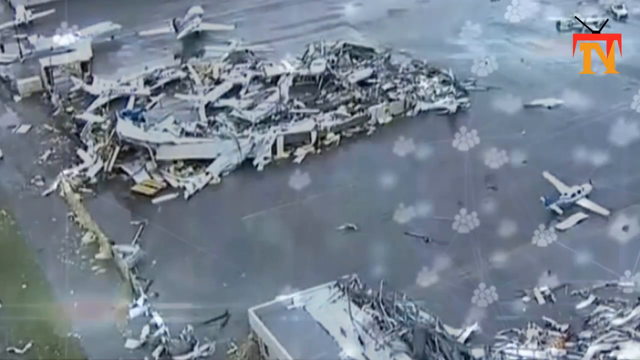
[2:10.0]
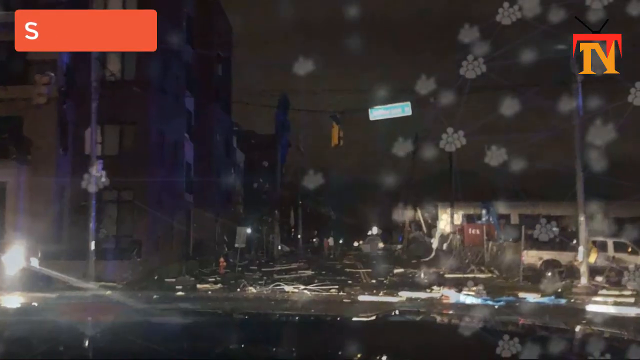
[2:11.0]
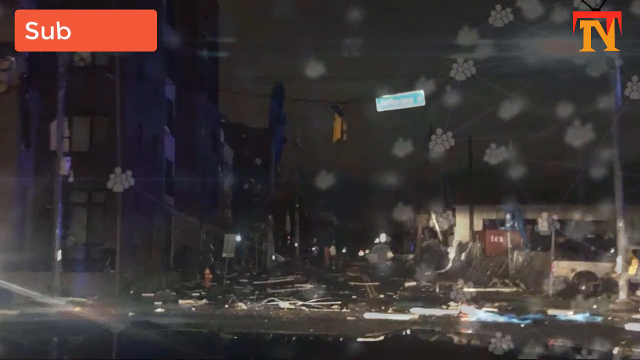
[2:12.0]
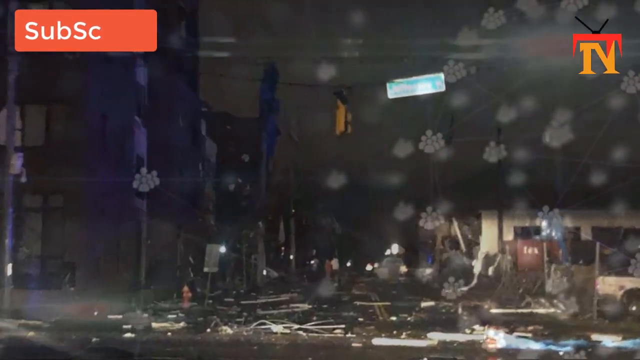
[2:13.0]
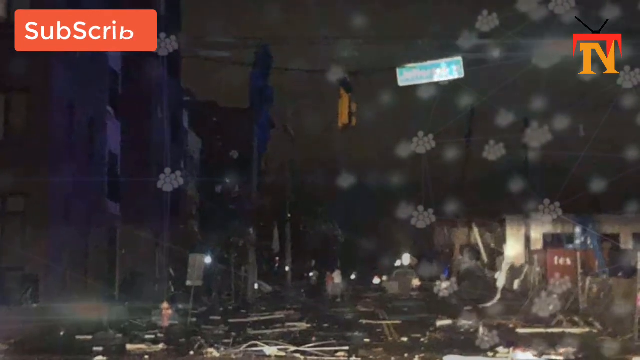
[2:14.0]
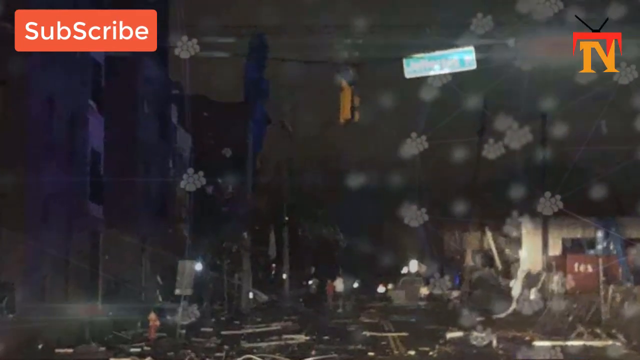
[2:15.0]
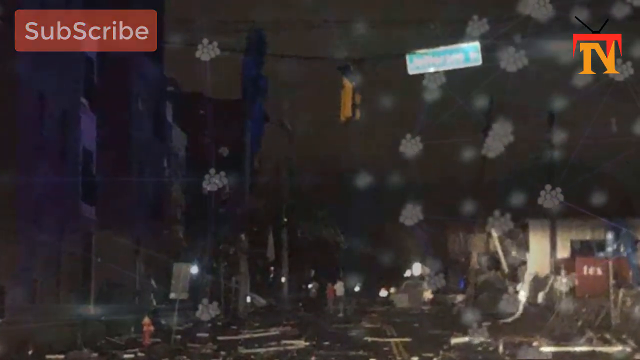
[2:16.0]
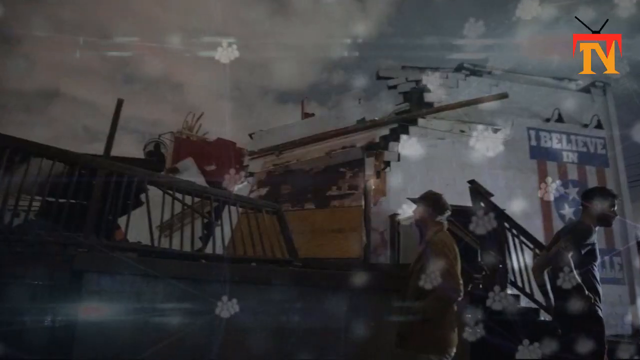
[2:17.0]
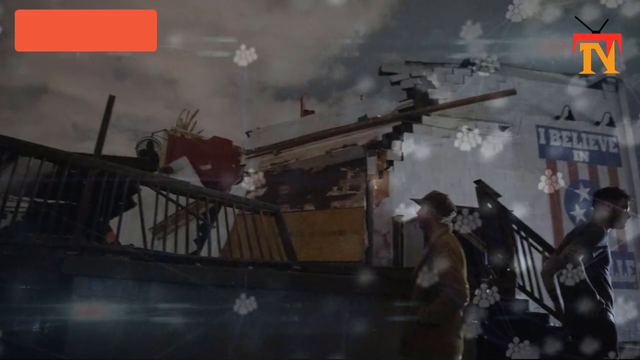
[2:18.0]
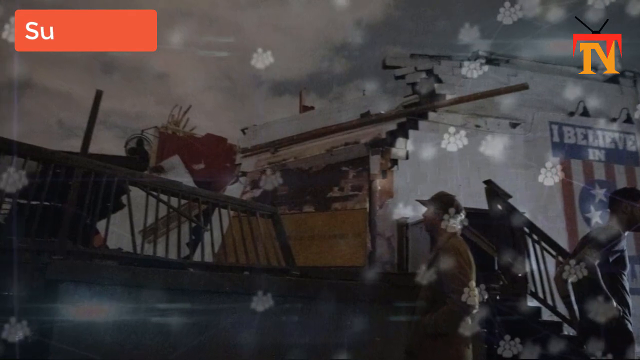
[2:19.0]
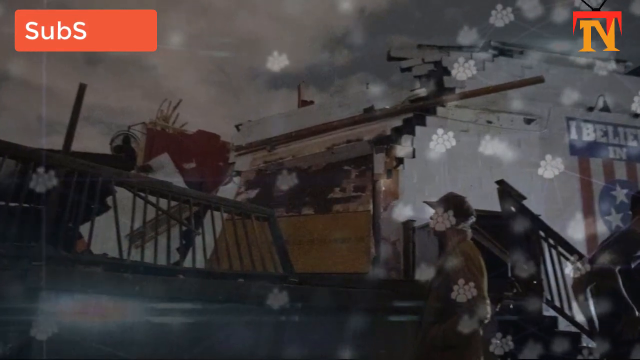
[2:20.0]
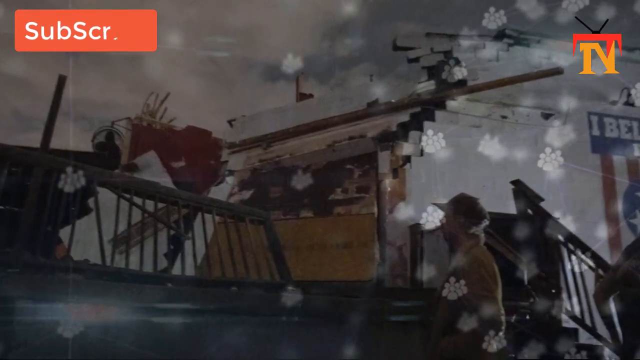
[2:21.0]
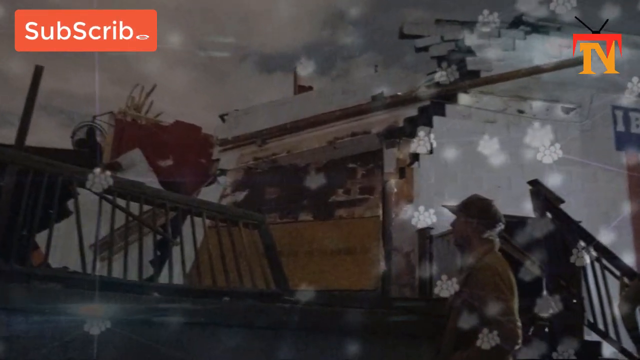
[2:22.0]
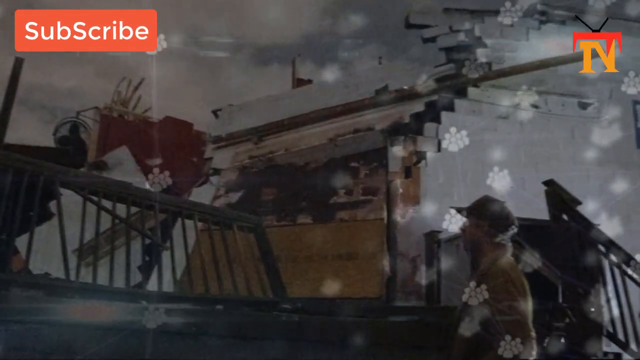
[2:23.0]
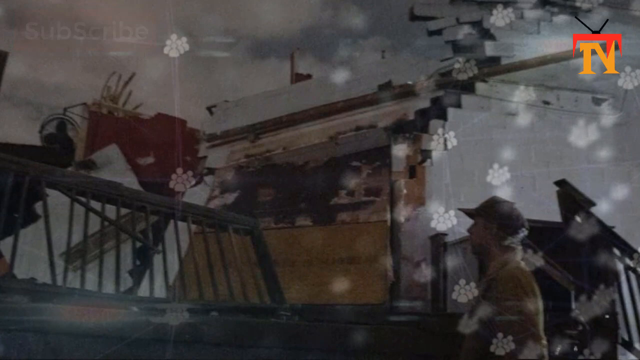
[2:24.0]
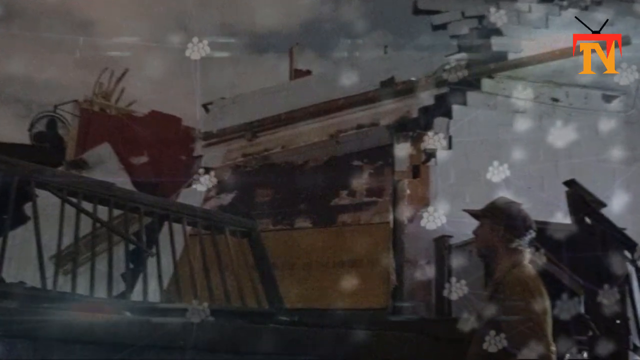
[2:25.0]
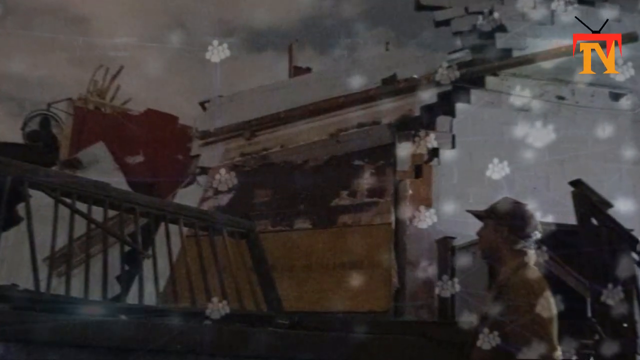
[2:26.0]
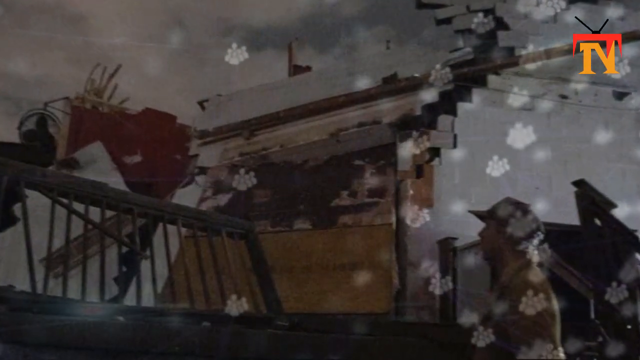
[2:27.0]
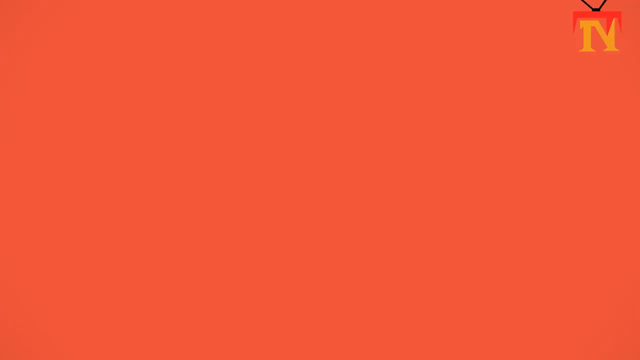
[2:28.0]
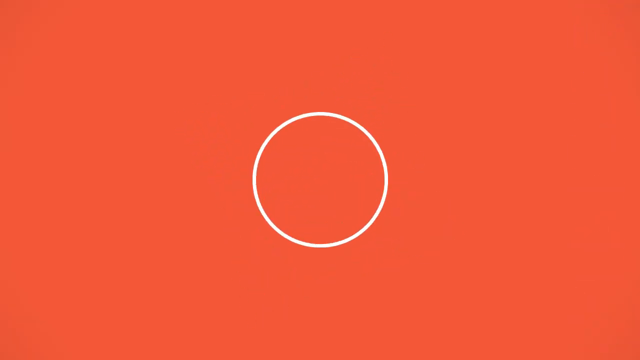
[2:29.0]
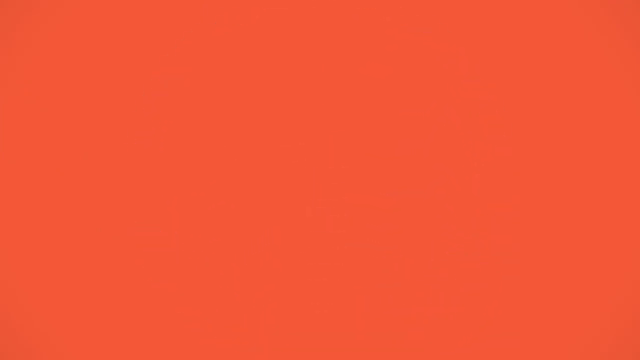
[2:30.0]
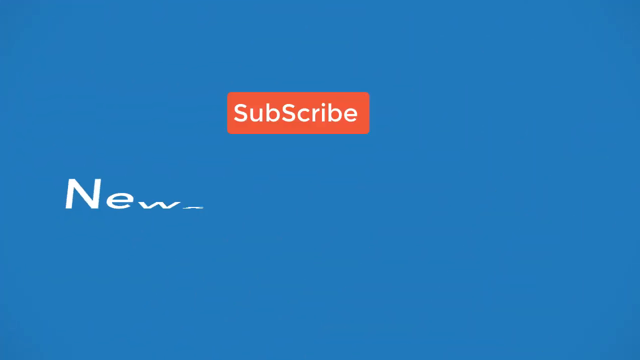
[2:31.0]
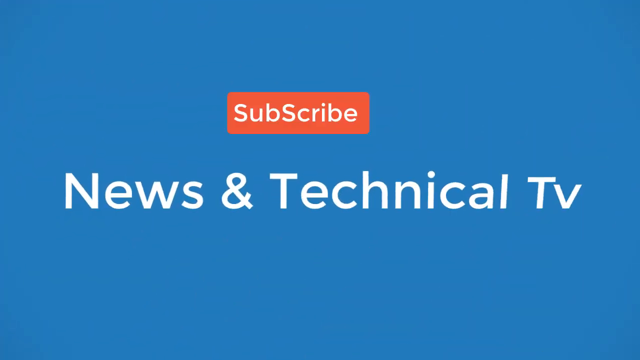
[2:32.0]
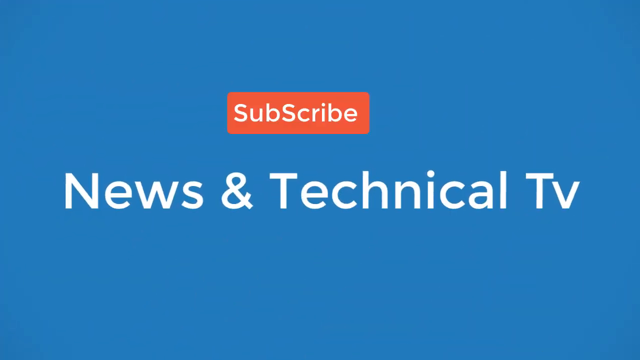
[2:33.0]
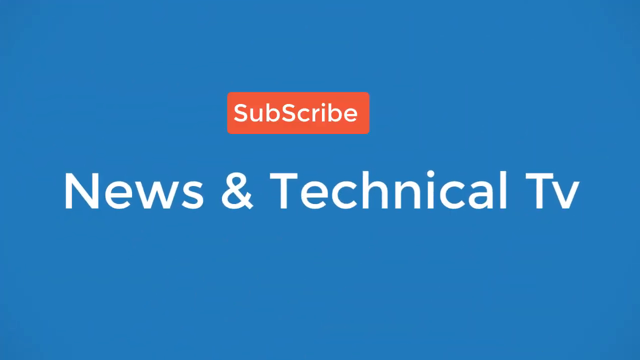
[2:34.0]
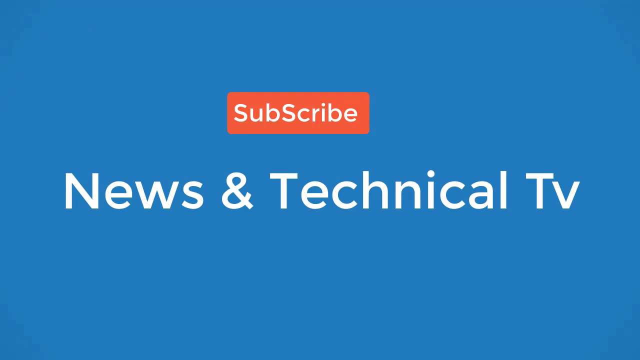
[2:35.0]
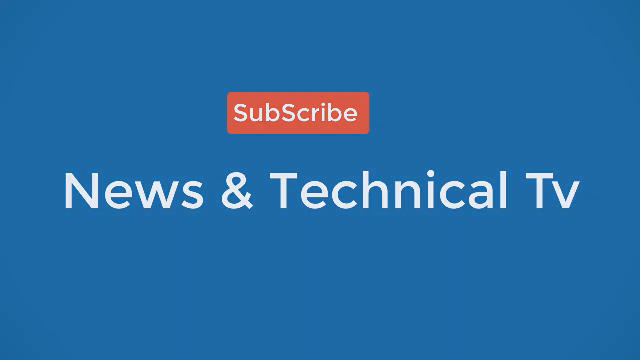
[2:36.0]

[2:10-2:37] The image of the wreckage of multiple planes in a circular formation at the top of the screen is slowly zoomed into at the center. The scene cuts to a nighttime view of a street, with a quite trashed building on the right-hand side and, above in the center where the camera zooms in, a single street light. The video then cuts to the building seen at the beginning, with the flag on the right-hand side showing only its upper portion, reading "I believe in". The back side of the building is in clear view, completely crumbled by the damage. The fencing in front, which appears to be made of wood, is bent forward, and a man stands at the bottom center, slightly to the right, looking at the destruction. The video cuts to an orange color, which turns into blue with "News and Technology TV" in white font.